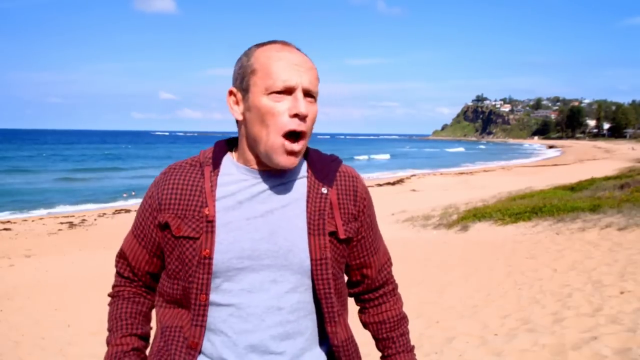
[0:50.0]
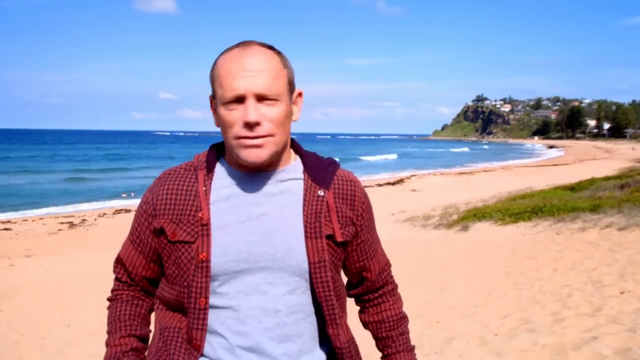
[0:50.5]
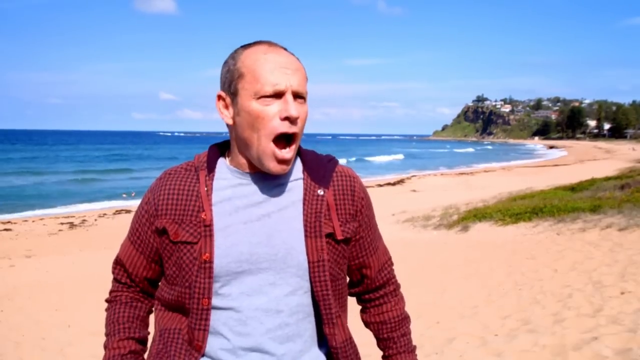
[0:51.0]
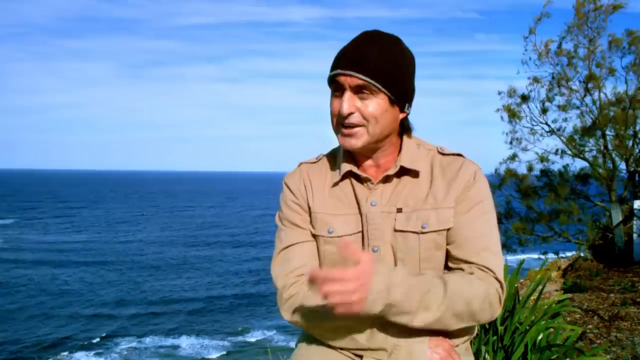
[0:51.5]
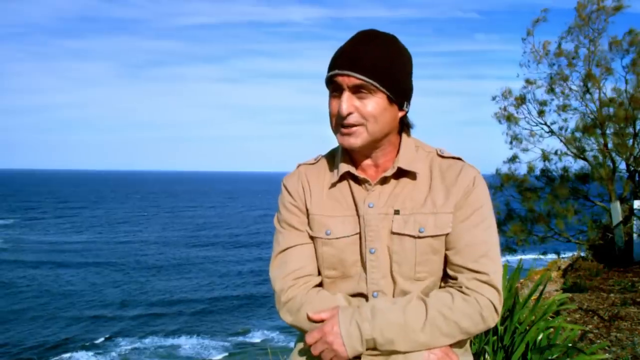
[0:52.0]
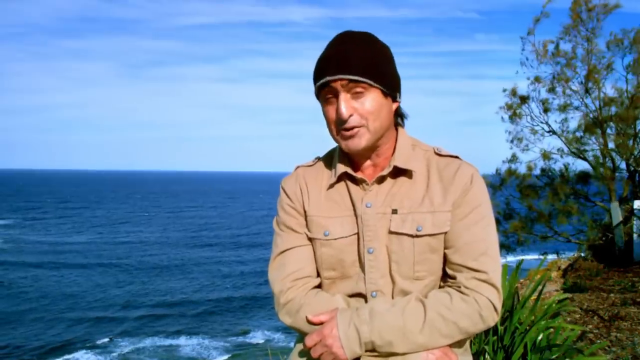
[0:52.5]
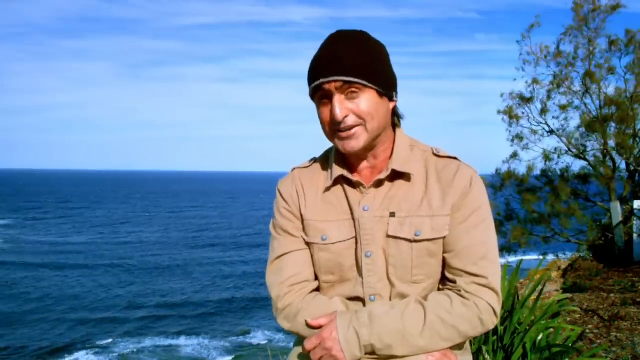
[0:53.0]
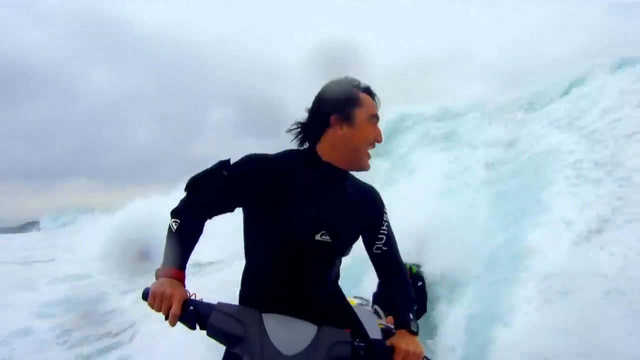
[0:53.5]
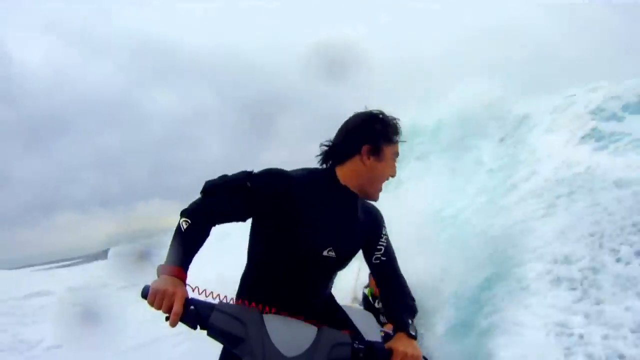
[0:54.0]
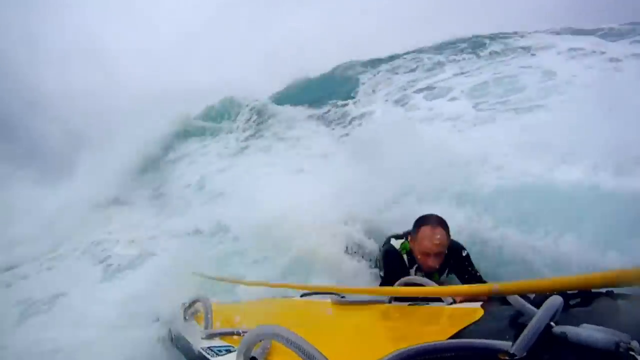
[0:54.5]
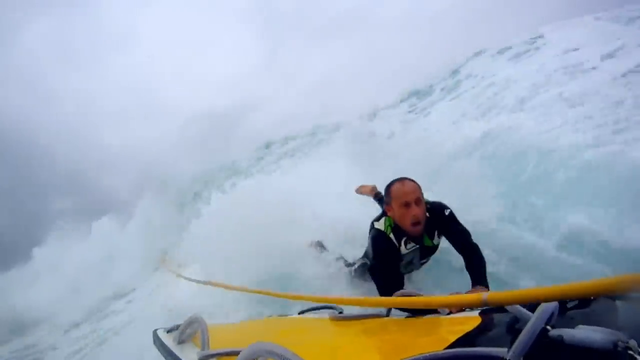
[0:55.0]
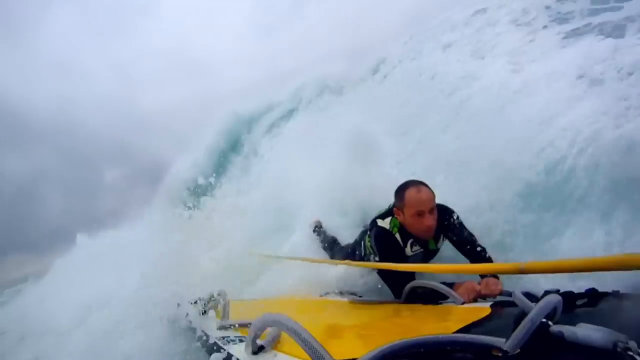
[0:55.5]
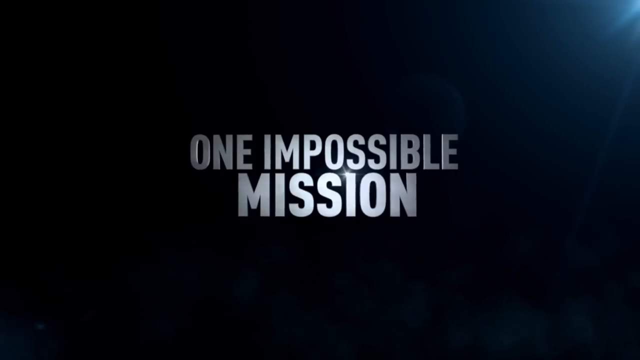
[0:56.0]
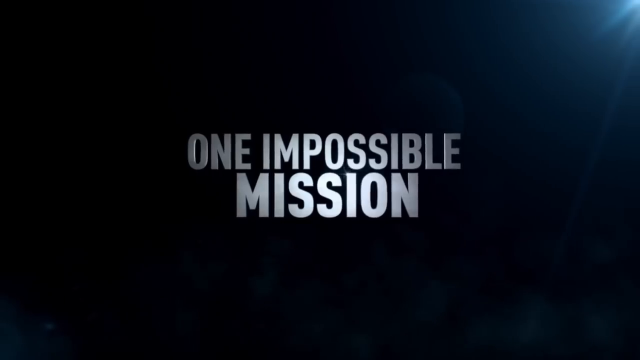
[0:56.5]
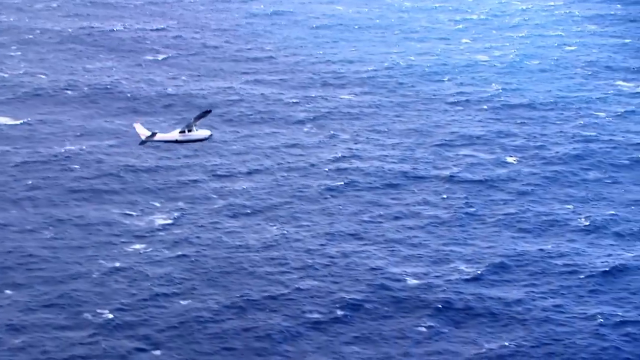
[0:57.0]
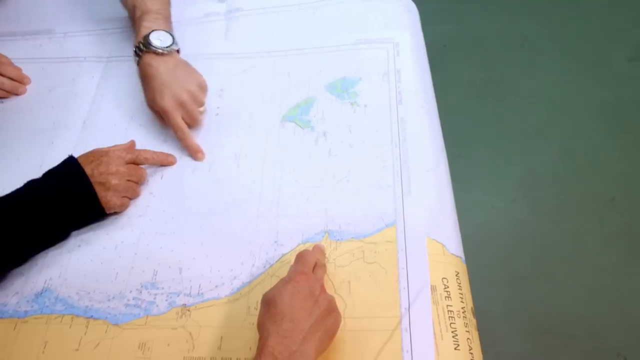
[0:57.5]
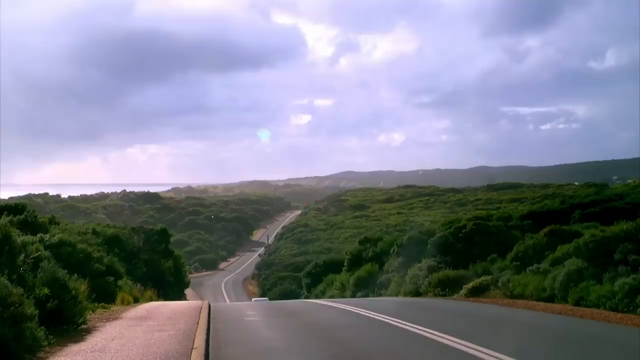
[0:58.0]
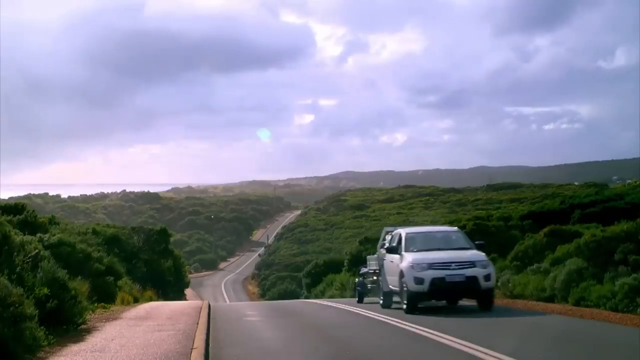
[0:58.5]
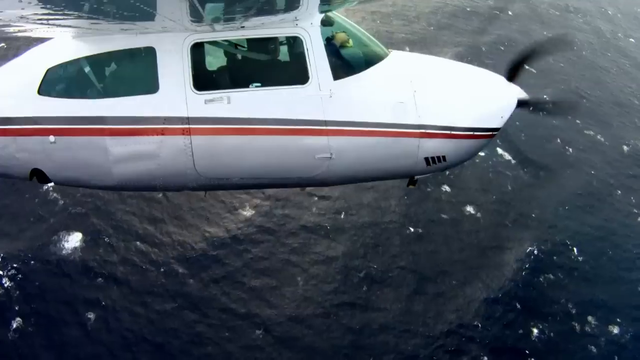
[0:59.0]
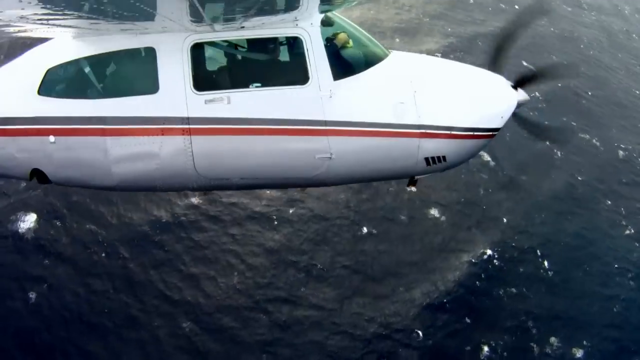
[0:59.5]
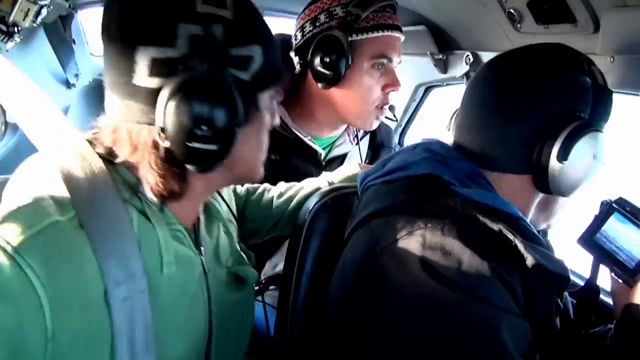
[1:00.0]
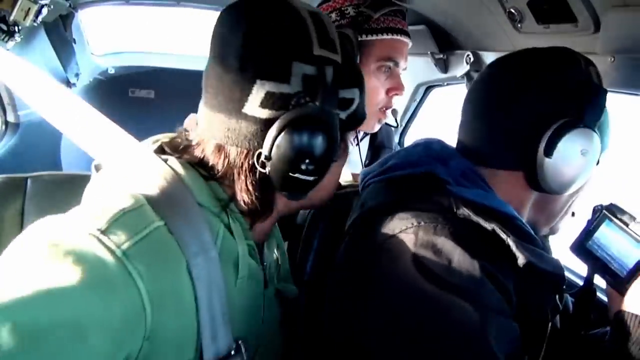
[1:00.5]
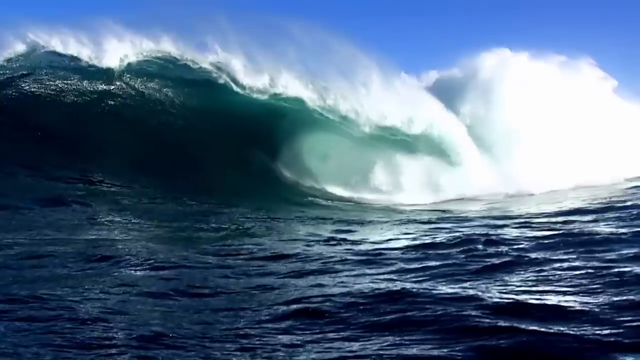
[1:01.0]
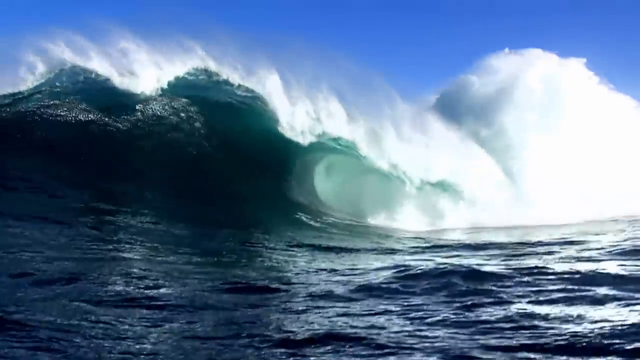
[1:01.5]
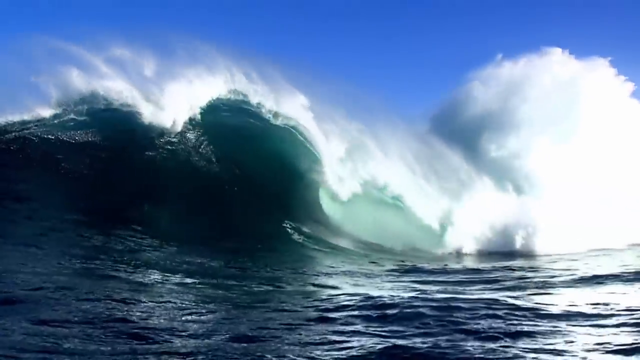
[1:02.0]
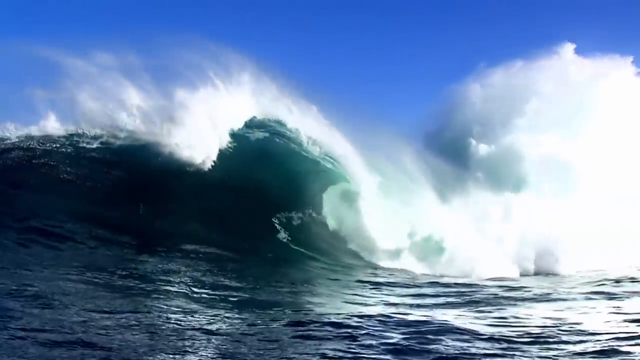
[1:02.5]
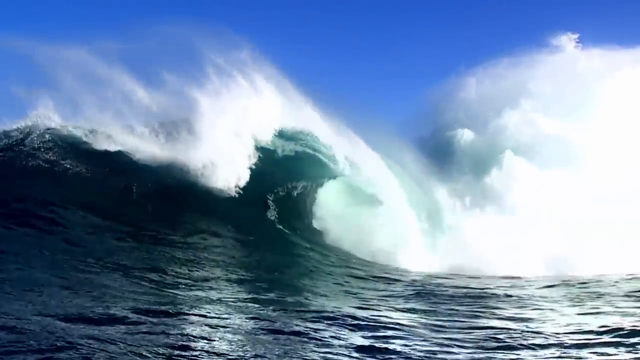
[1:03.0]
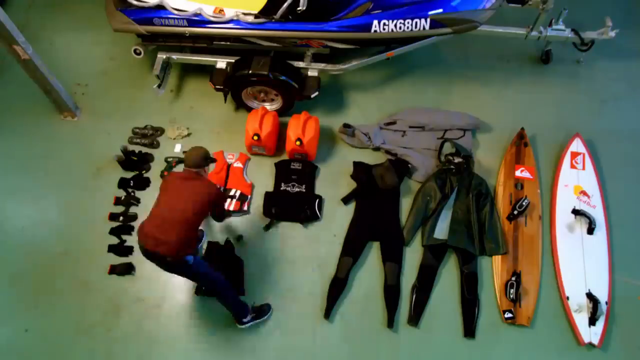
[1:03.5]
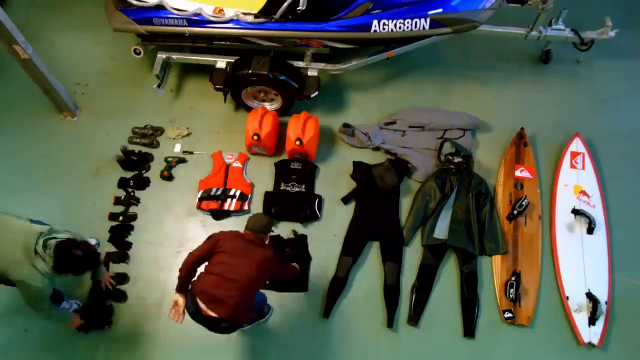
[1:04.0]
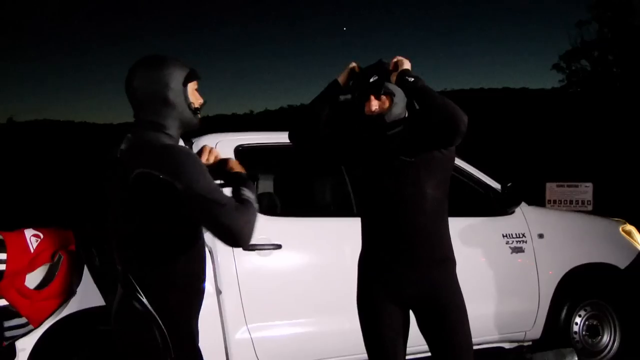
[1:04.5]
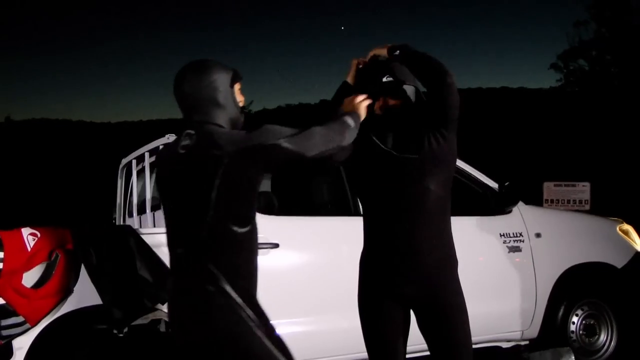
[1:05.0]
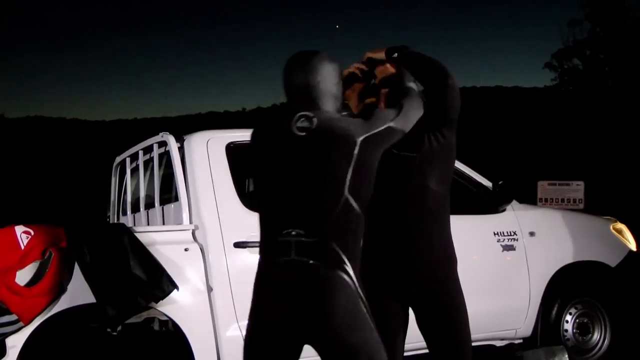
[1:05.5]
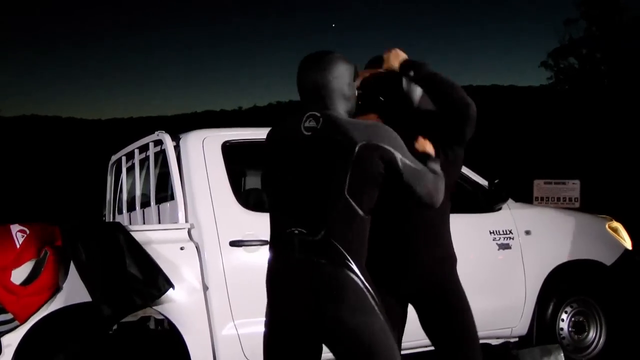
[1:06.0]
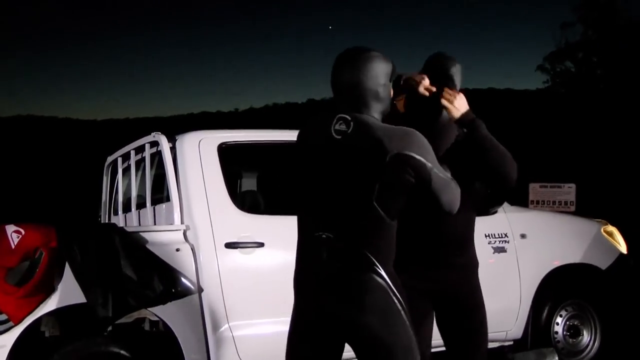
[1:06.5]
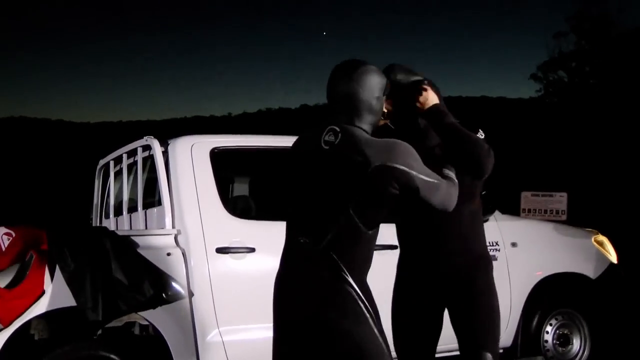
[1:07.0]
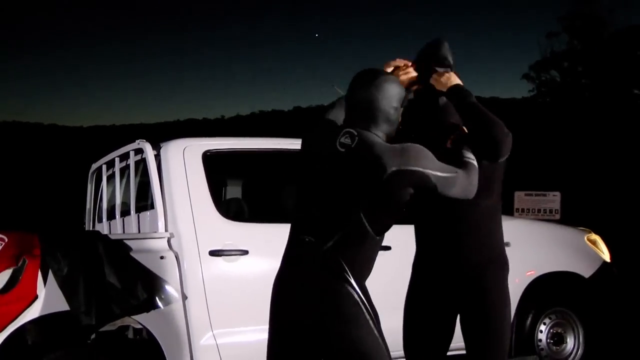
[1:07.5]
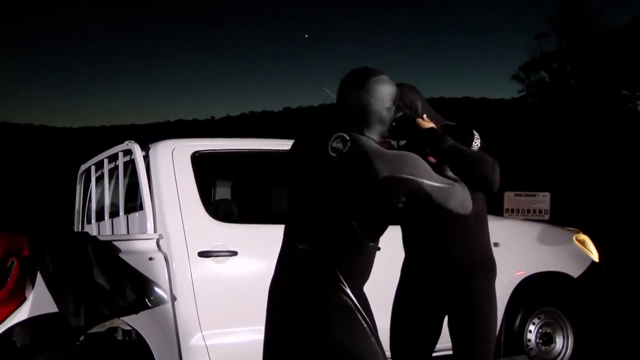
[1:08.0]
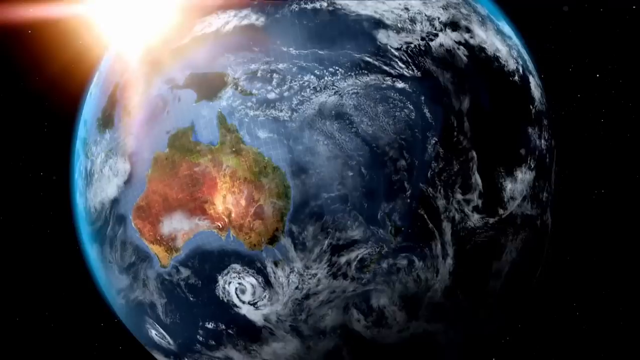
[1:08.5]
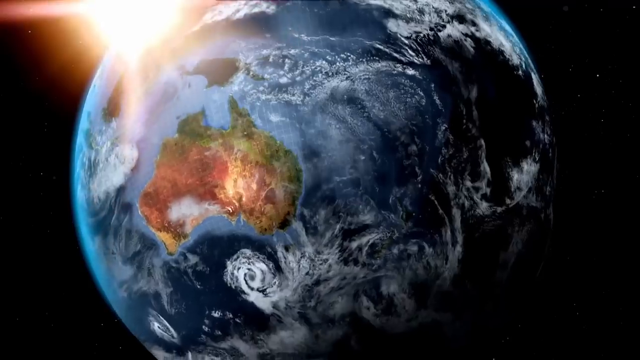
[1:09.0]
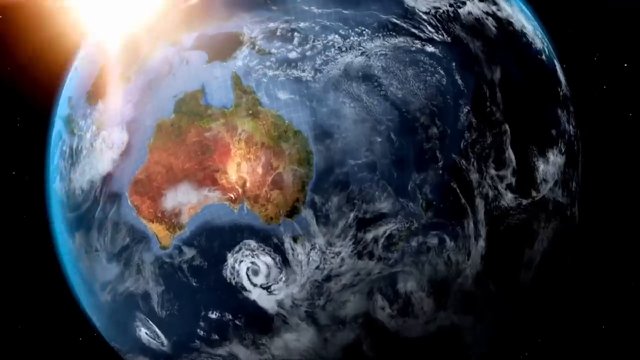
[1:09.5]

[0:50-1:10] Two surfers talk to each other. The video quickly transitions through a series of scenes: a car racing down a track, a helicopter flying in the air, and a person putting on a suit to scuba dive in a body of water. A globe then rotates on its axis and focuses on Australia. A beach is shown right next to a number of homes on a grassy area. The scenes transition quickly from one to another.